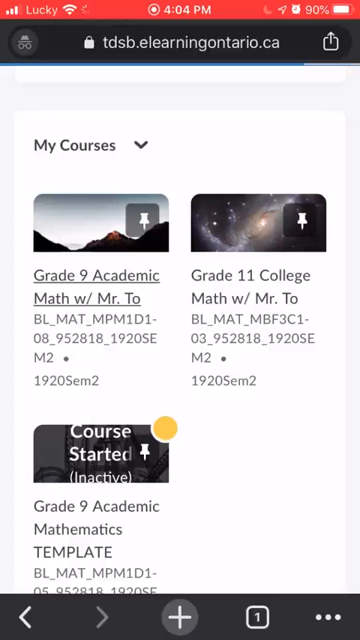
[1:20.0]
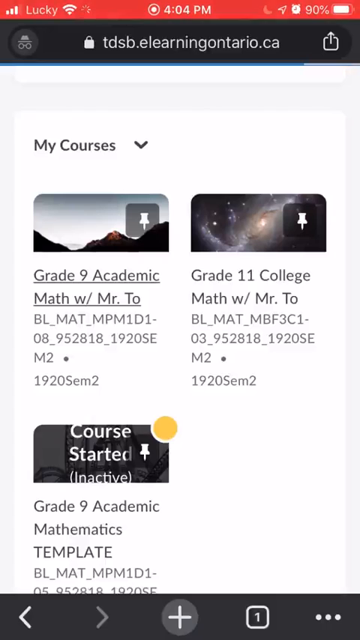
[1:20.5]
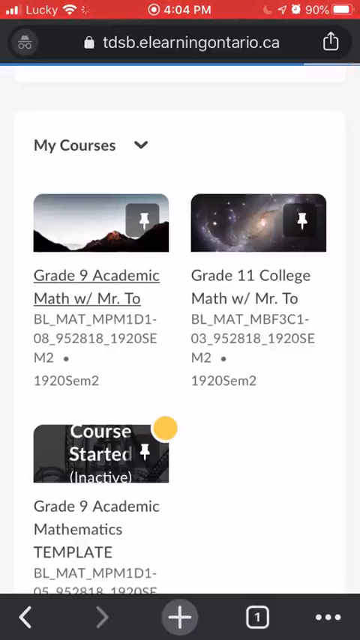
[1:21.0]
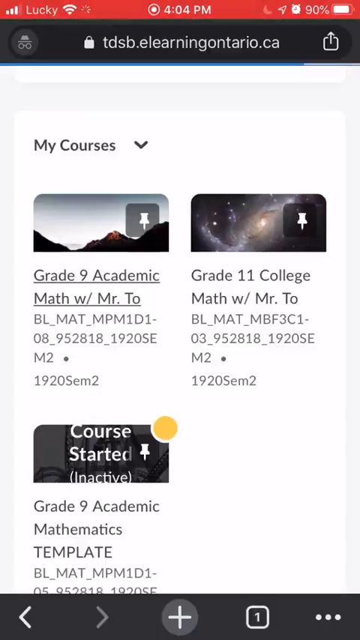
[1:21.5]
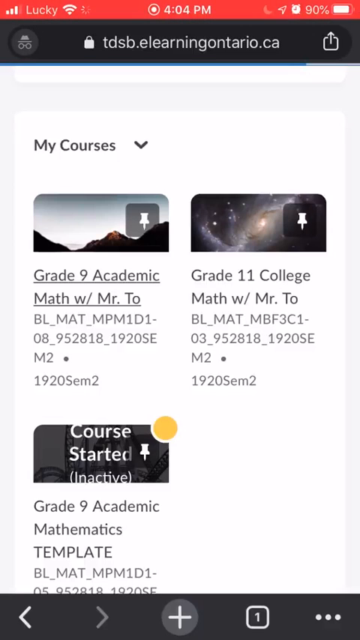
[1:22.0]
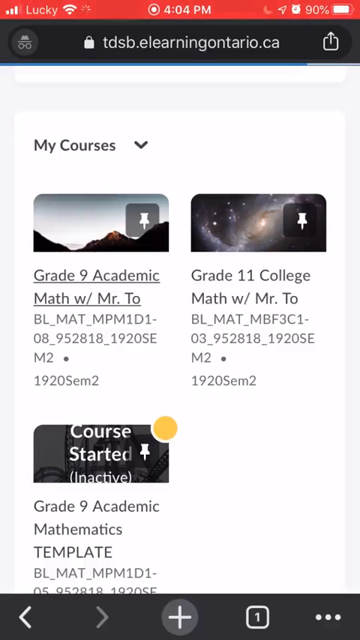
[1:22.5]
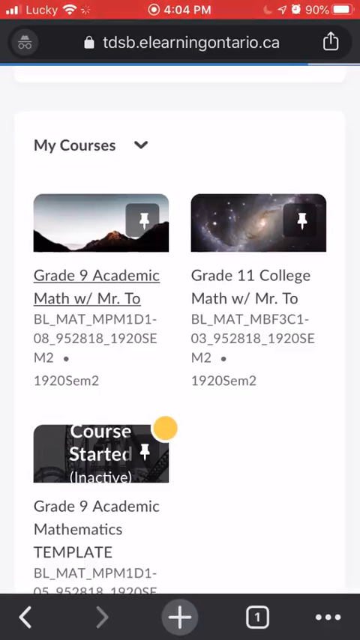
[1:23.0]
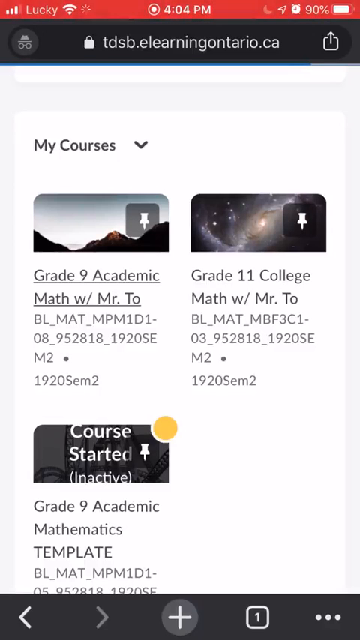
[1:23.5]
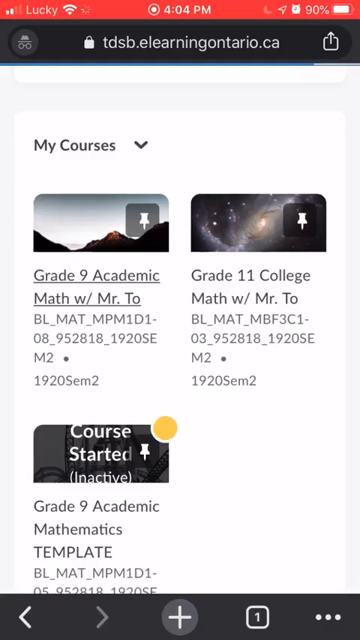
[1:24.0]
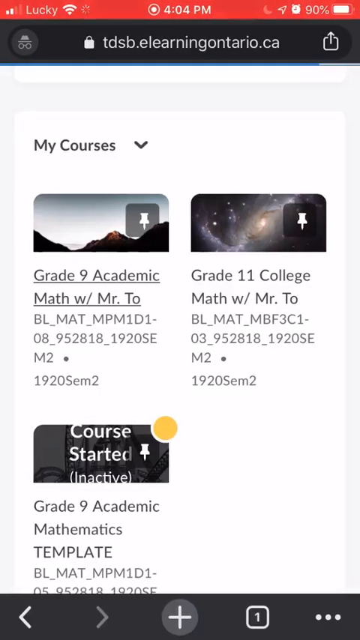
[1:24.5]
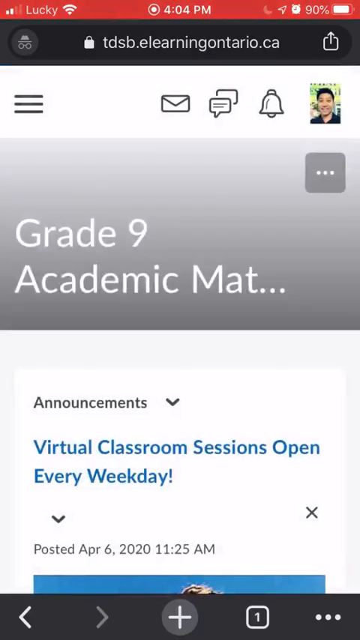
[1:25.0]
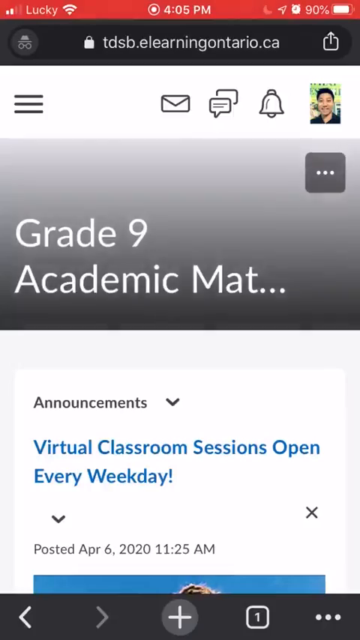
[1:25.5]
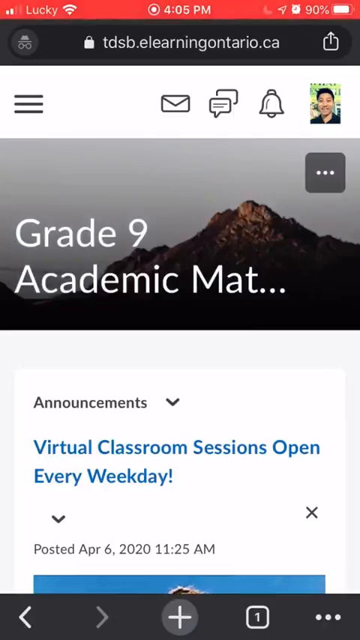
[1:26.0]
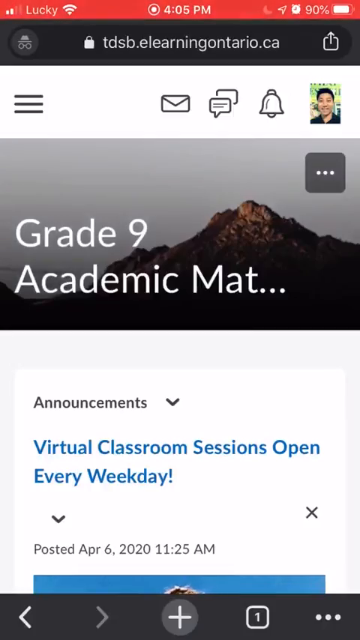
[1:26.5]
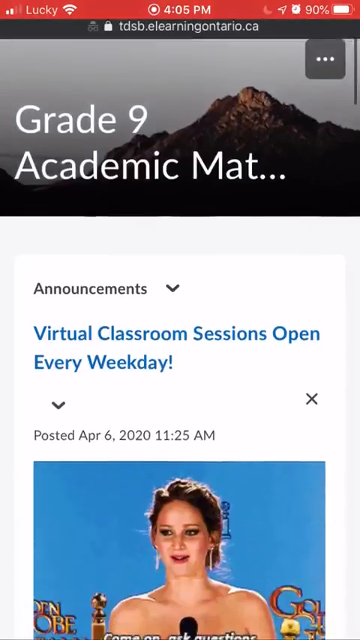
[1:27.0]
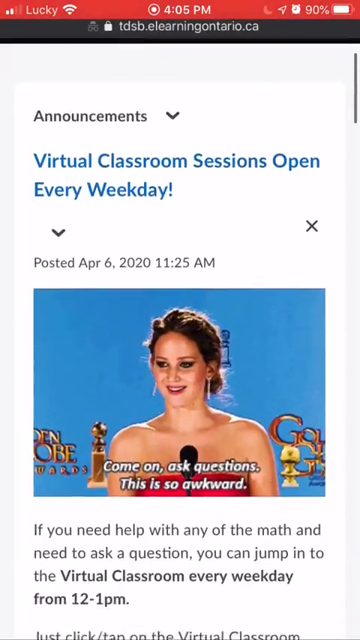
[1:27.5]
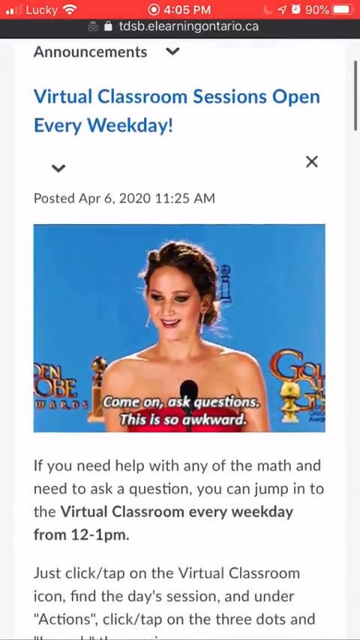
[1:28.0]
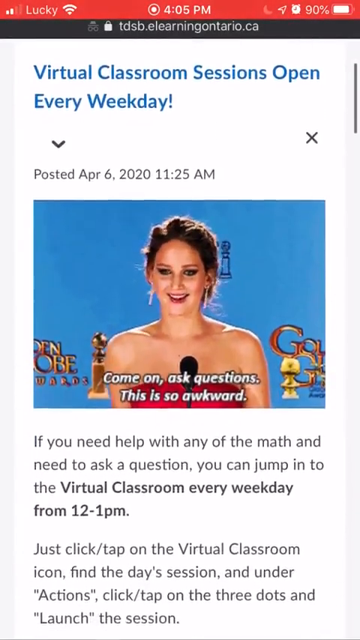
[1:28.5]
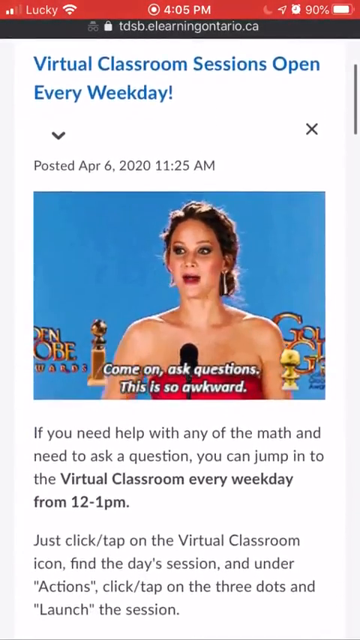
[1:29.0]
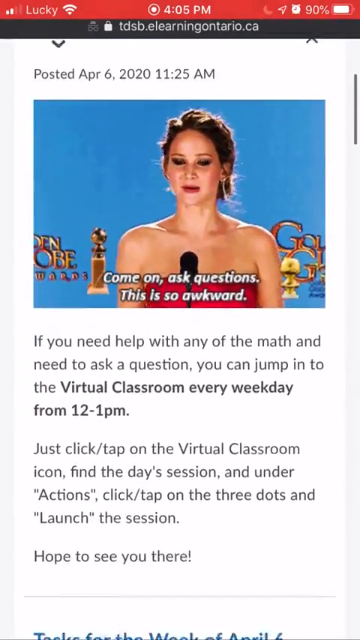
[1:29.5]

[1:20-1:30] The user enters the Grade 9 Academic Math course. A virtual classroom announcement at the very top carries the caption "virtual classroom sessions open every weekday". A meme-type caption appears as the user keeps scrolling.